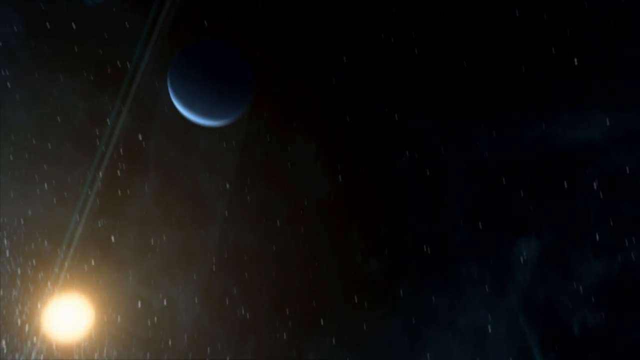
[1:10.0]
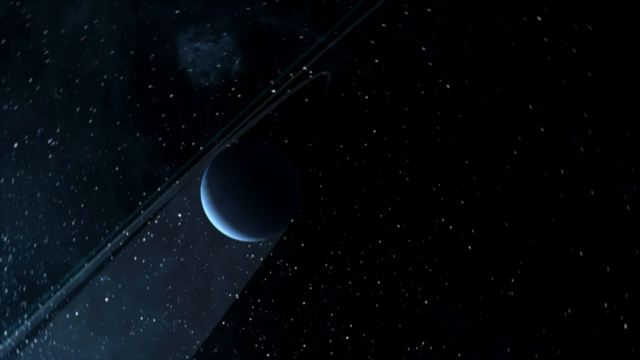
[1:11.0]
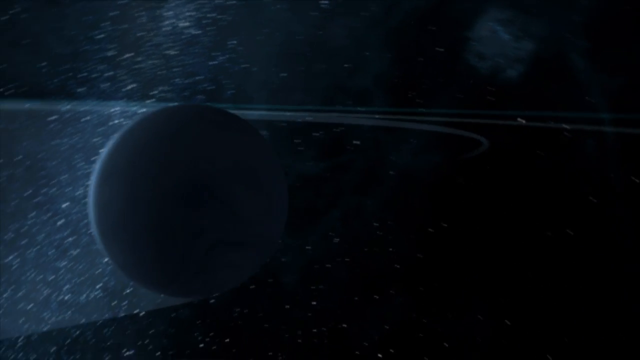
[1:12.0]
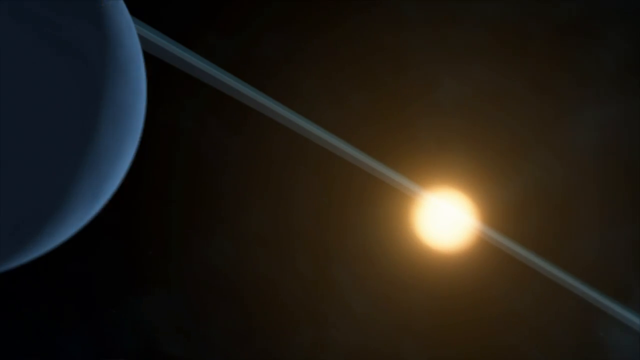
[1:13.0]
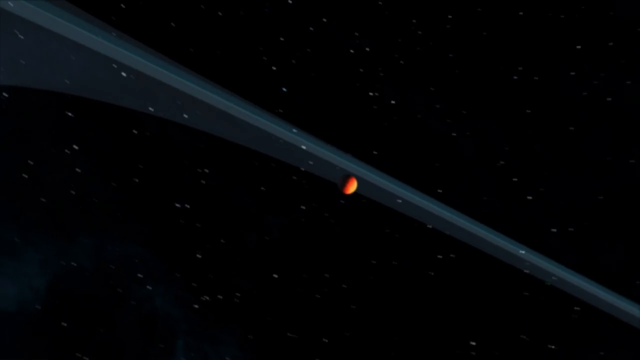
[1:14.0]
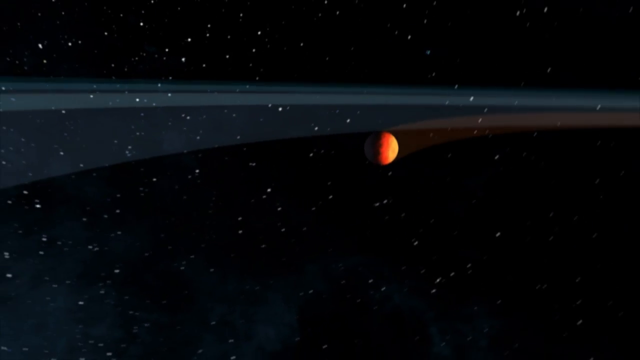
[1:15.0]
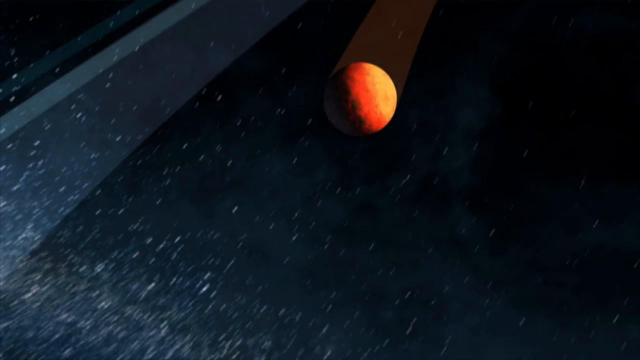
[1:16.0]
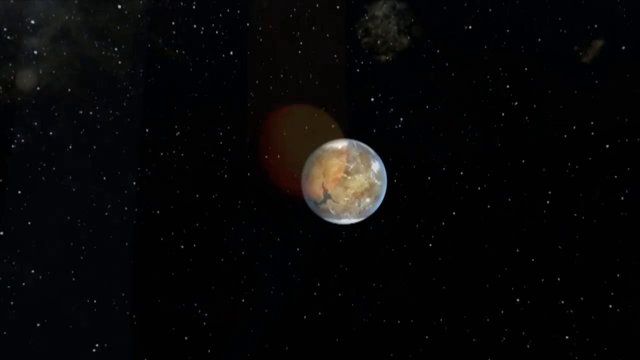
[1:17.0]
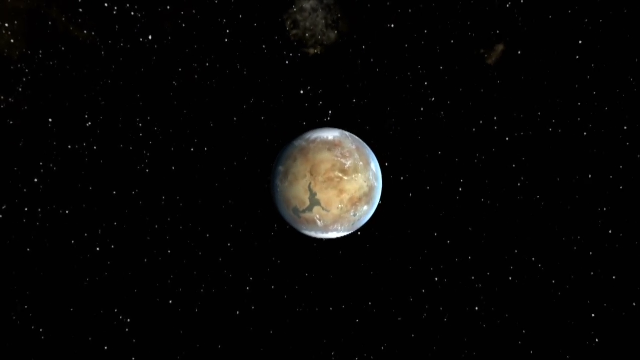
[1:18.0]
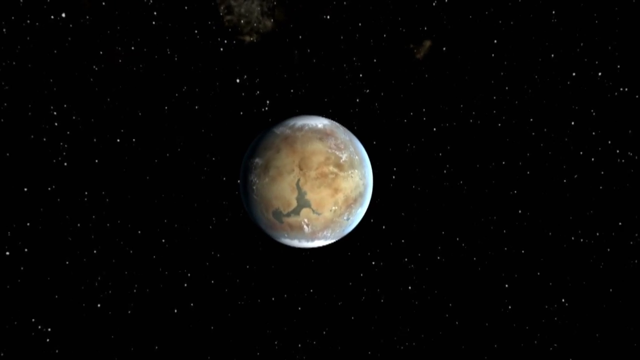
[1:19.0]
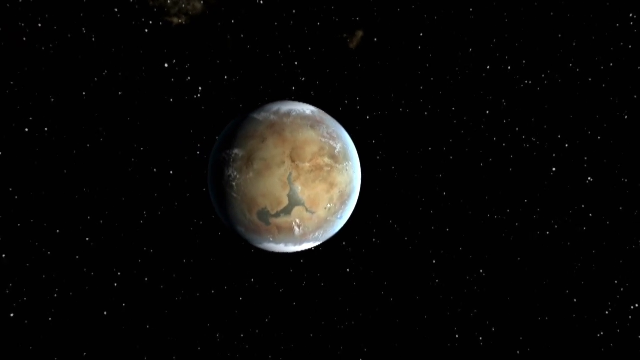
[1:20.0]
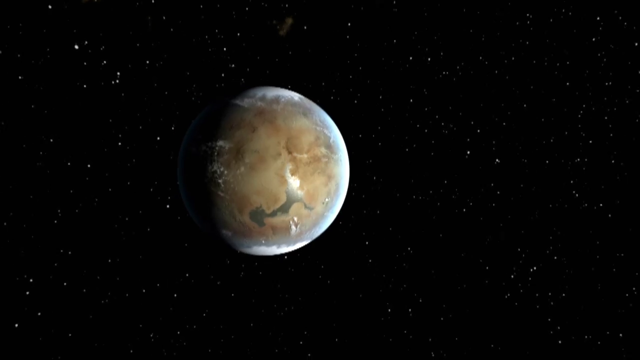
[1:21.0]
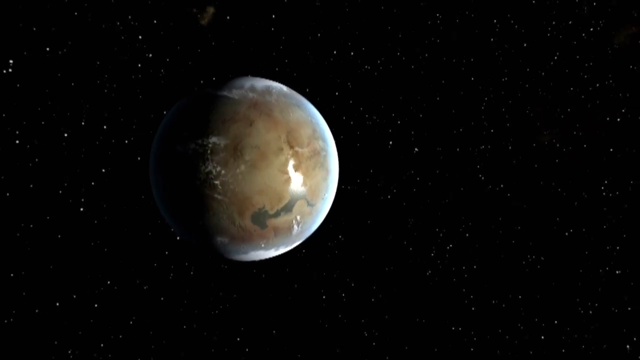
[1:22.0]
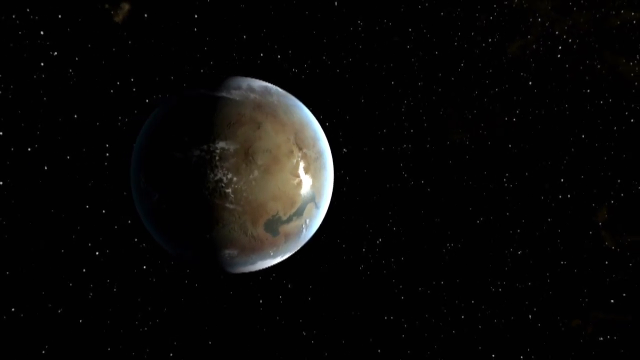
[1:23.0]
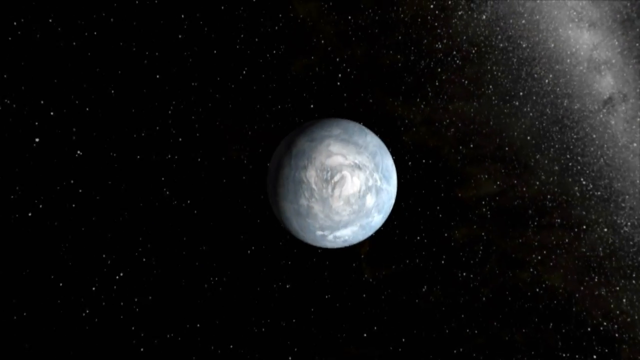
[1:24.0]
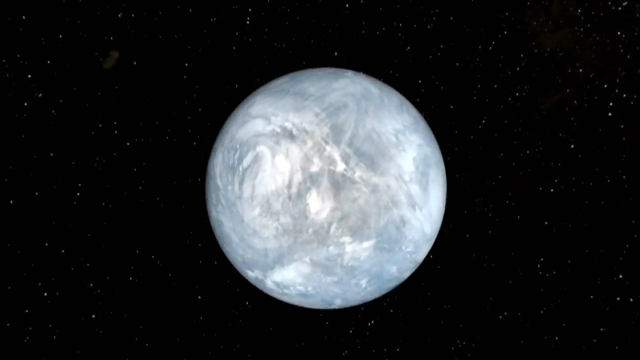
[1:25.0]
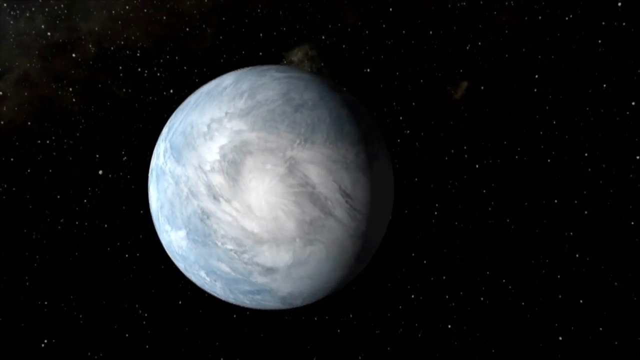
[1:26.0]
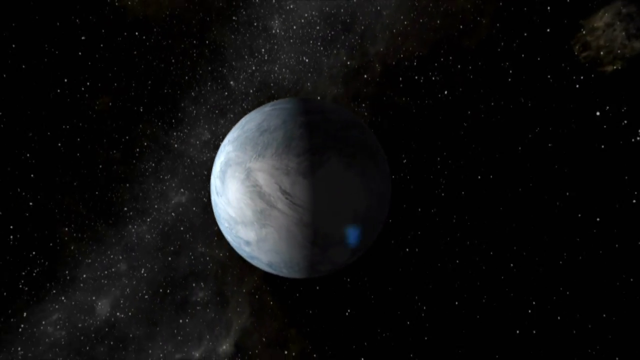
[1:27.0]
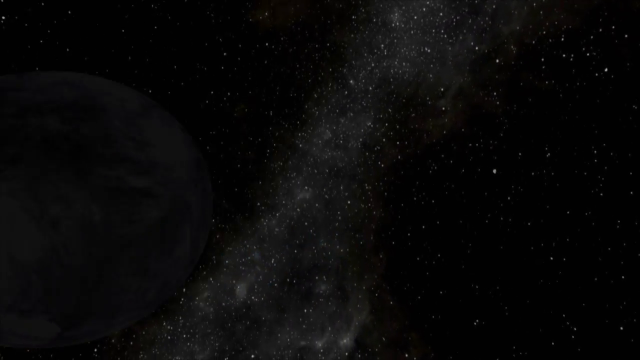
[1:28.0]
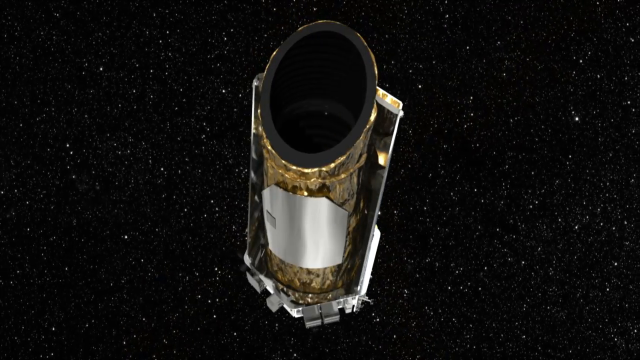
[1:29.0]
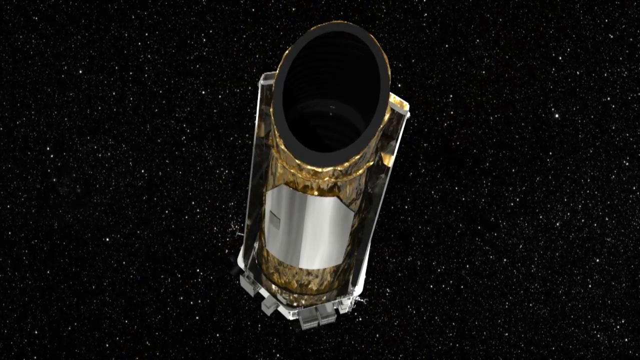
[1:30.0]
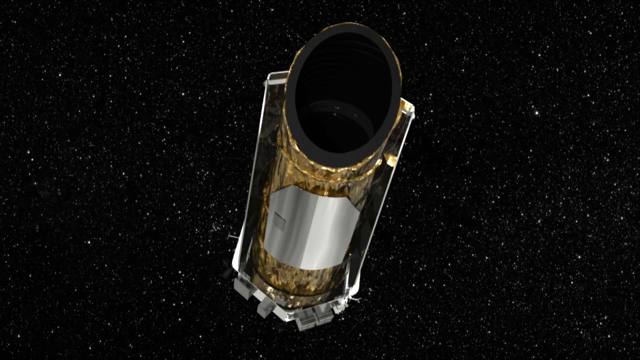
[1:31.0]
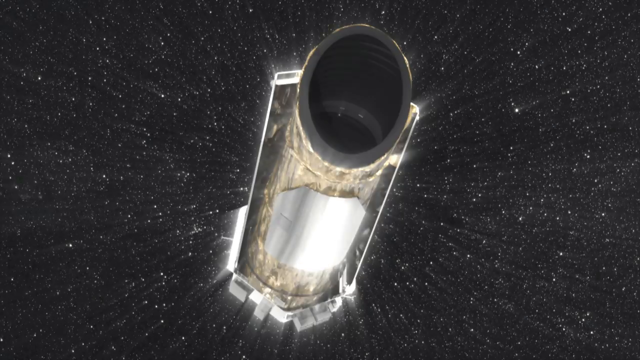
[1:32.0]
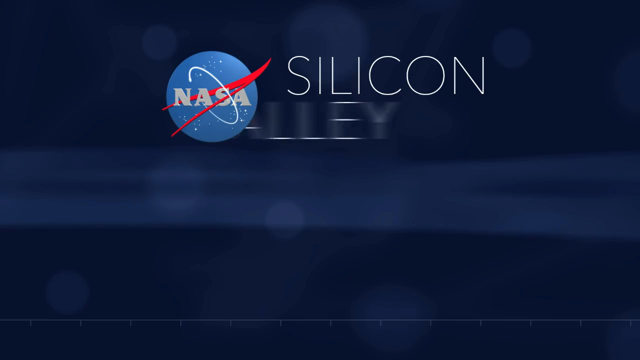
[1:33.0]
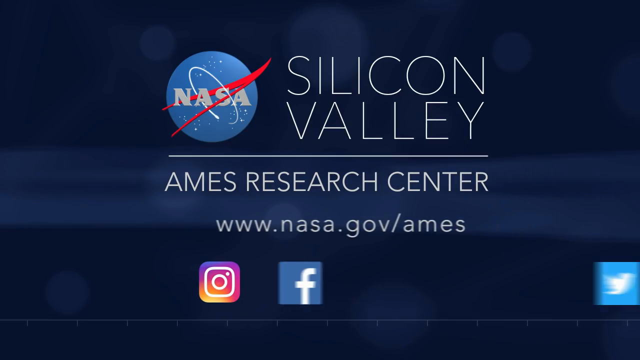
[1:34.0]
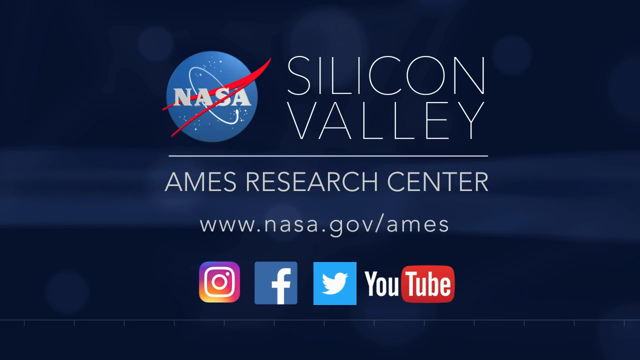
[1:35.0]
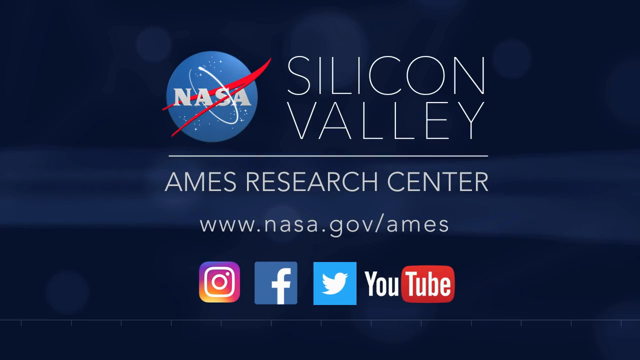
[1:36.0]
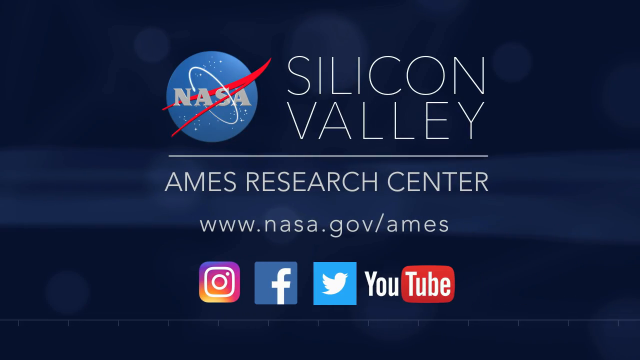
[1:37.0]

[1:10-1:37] A small blue planet hurtles through space with a kind of translucent trail behind it, then pulls and swings over to the left. An orange planet follows with its own orange trail behind it. A rotating planet appears in space, and the camera slowly zooms into it as the sun casts light across its surface. Another planet is kind of grayish and looks maybe very rocky, with white streaks on the surface; it flies towards the camera and then rotates. Little blue lights shine on its dark side, possibly lightning. Another shot shows the satellite: it is cylinder-shaped like a tube, with a large opening and a thick rim. It looks kind of like it has gold plating on the top and bottom, and the main area is made of kind of shiny silver metal. The satellite slowly kind of tilts to the right and then disappears against a black background with white stars all around. Then an image appears with the text "Silicon Valley Ames Research Center" and a NASA URL underneath, with logos for Instagram, Facebook, Twitter and YouTube below that and the NASA logo at the top of the screen, on a blue background.